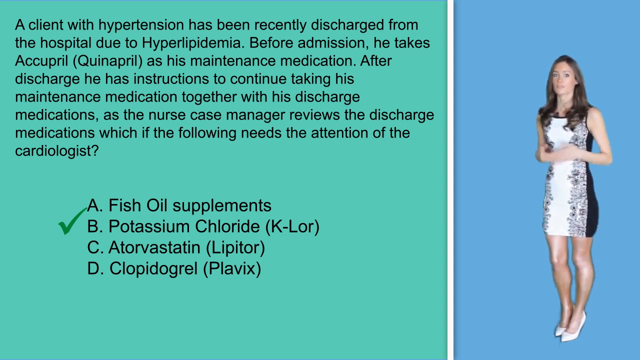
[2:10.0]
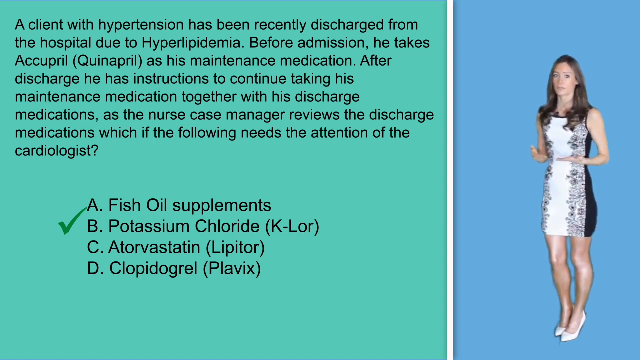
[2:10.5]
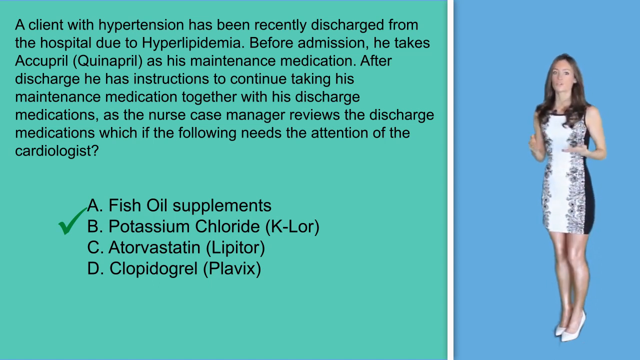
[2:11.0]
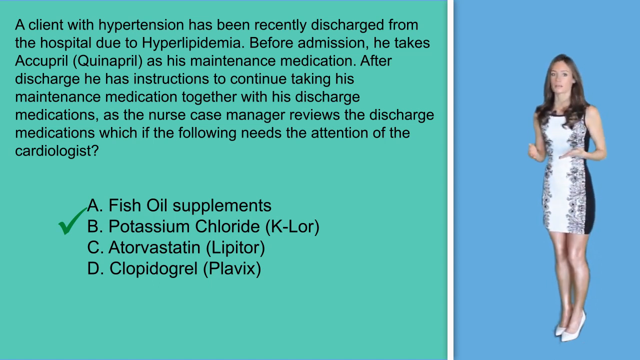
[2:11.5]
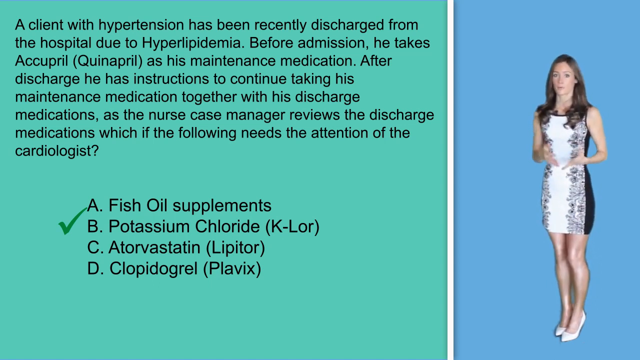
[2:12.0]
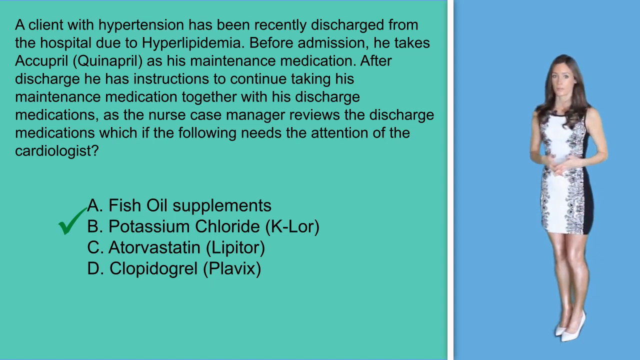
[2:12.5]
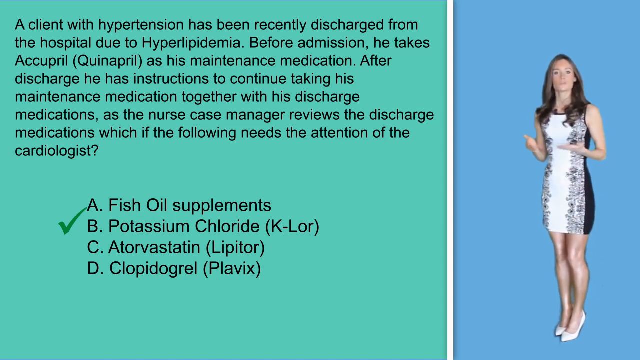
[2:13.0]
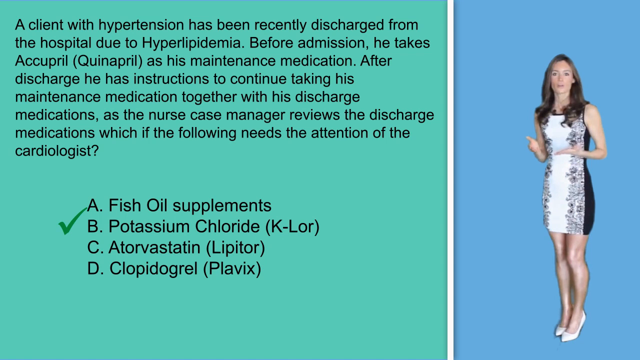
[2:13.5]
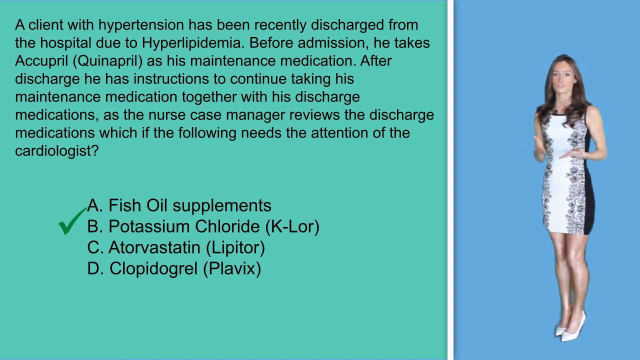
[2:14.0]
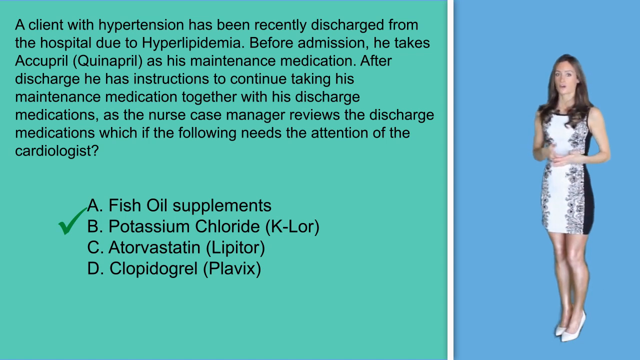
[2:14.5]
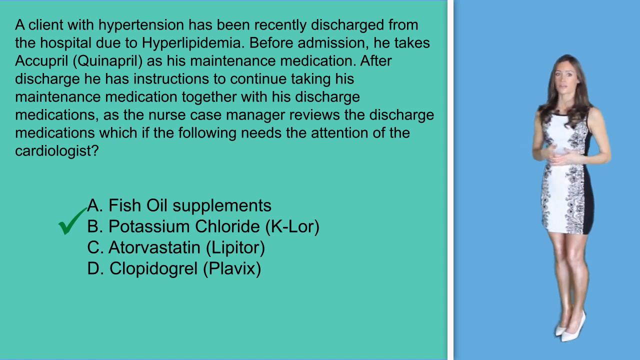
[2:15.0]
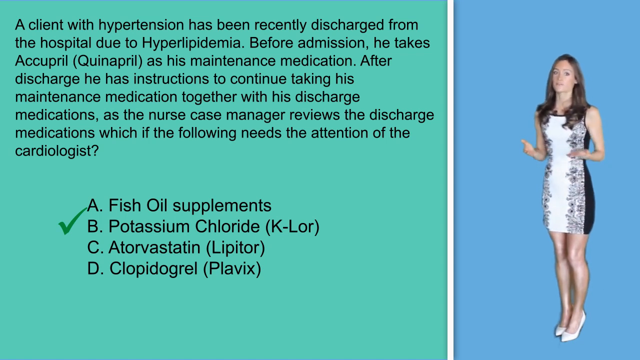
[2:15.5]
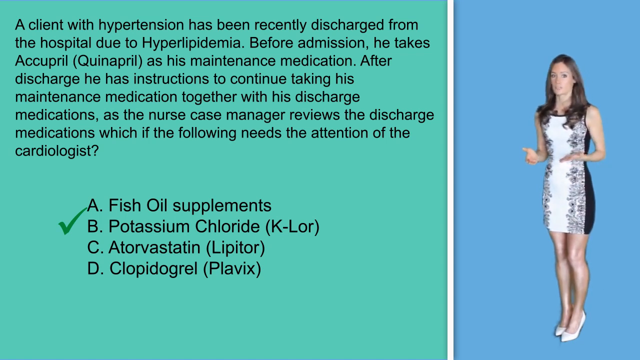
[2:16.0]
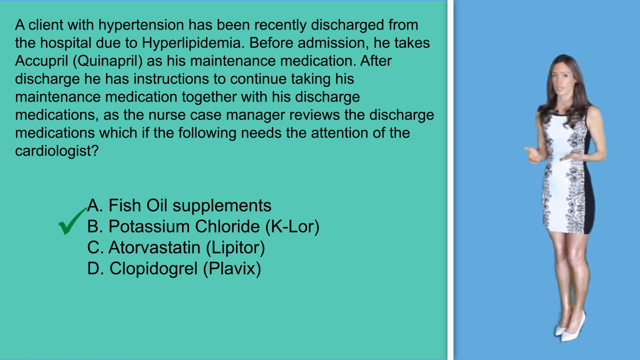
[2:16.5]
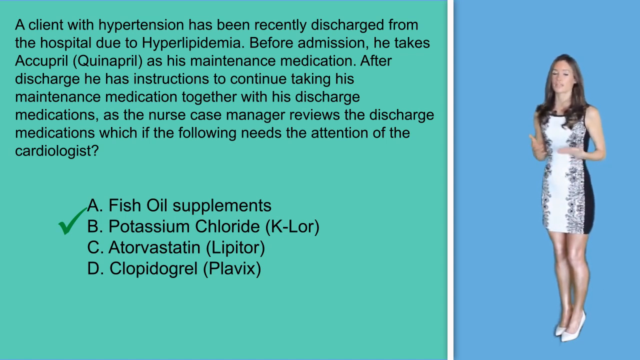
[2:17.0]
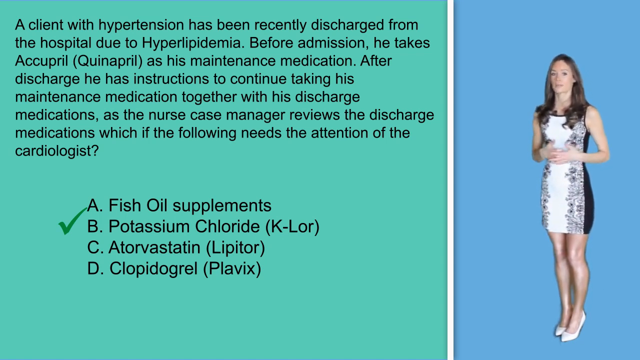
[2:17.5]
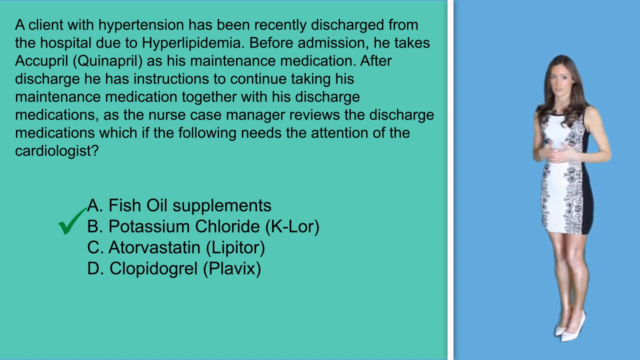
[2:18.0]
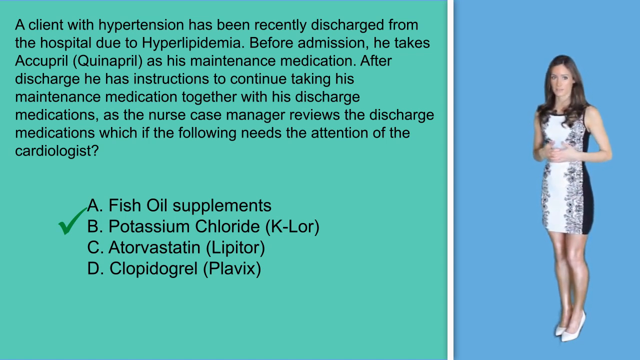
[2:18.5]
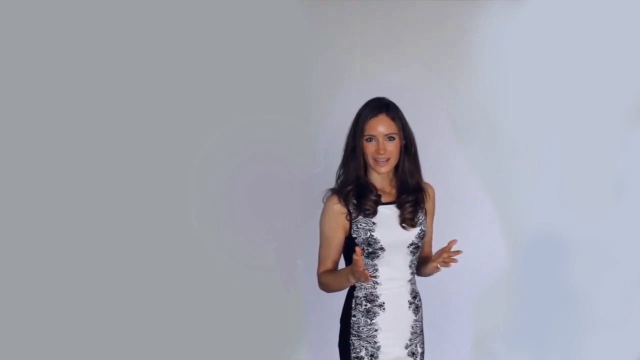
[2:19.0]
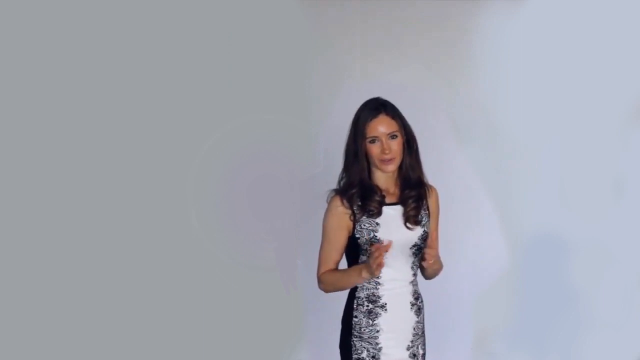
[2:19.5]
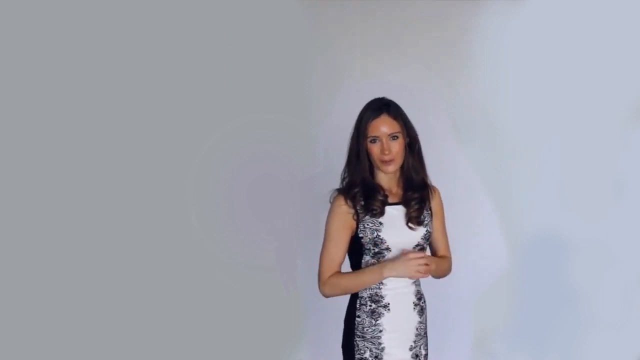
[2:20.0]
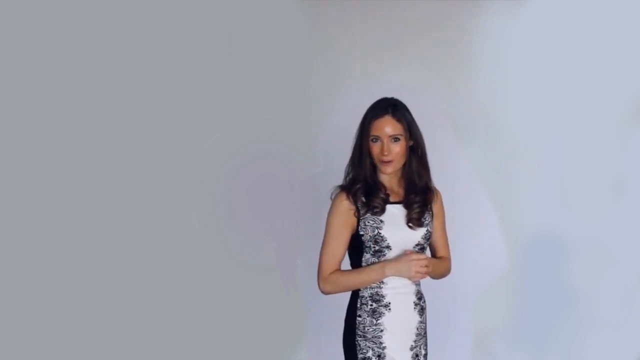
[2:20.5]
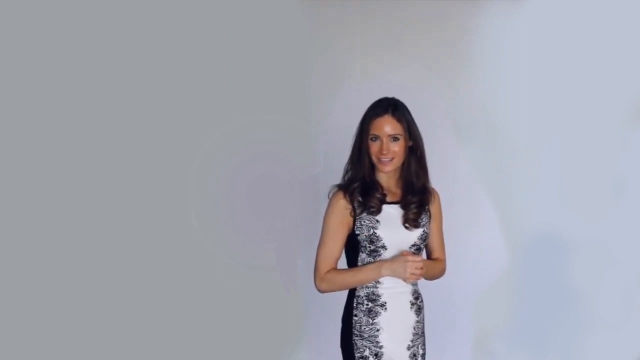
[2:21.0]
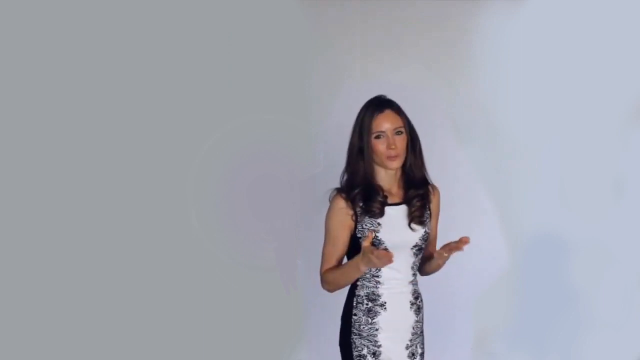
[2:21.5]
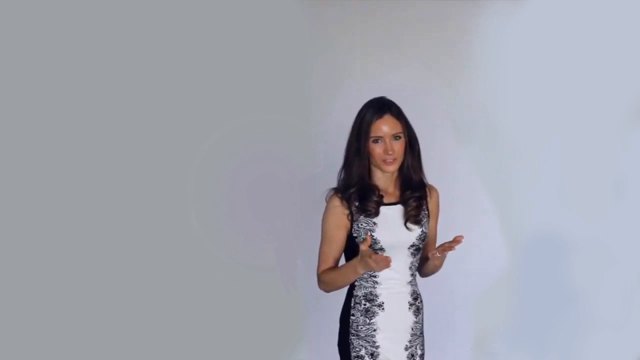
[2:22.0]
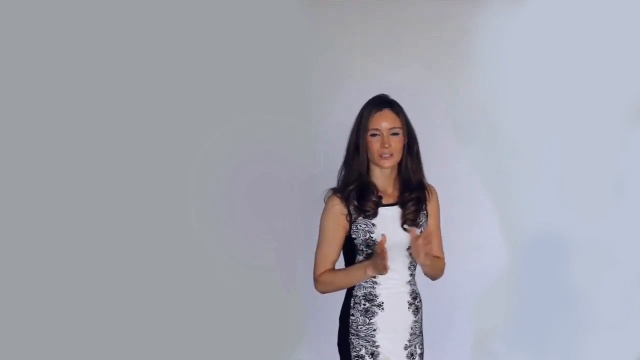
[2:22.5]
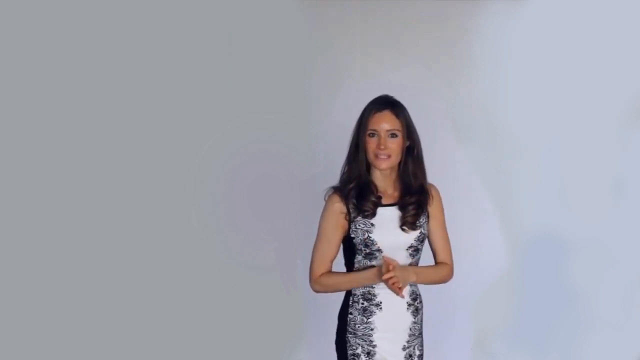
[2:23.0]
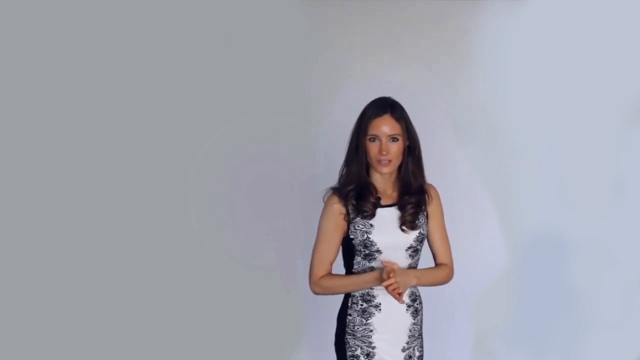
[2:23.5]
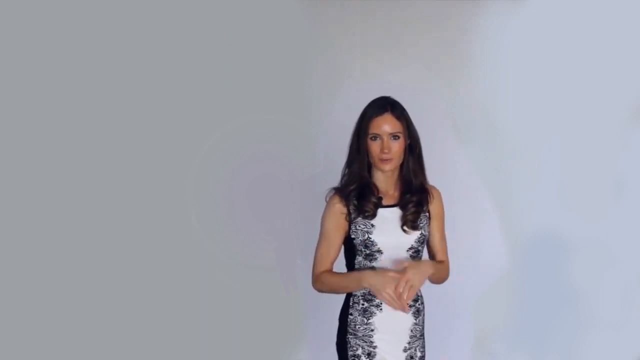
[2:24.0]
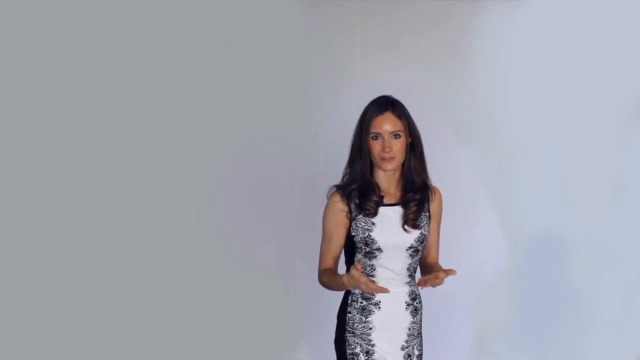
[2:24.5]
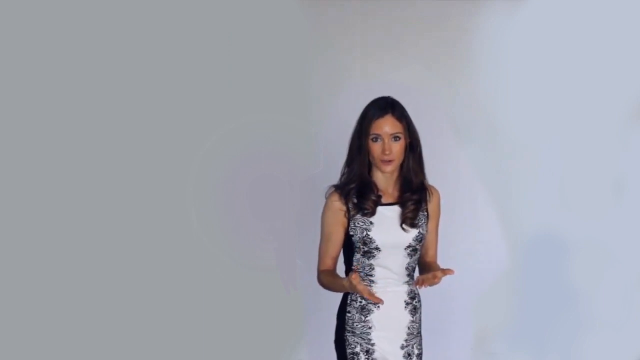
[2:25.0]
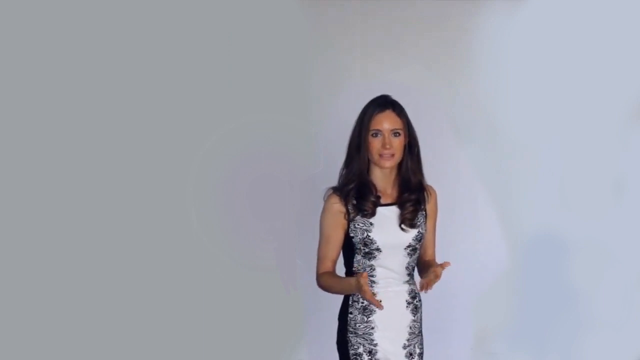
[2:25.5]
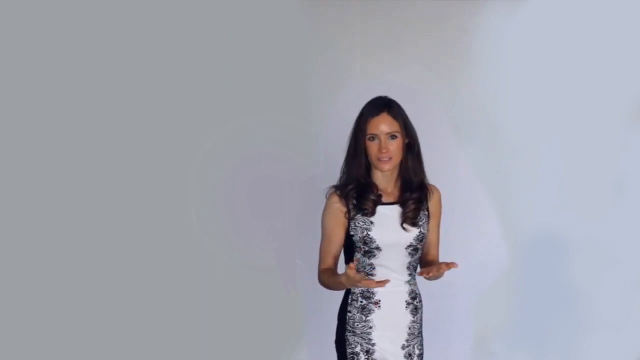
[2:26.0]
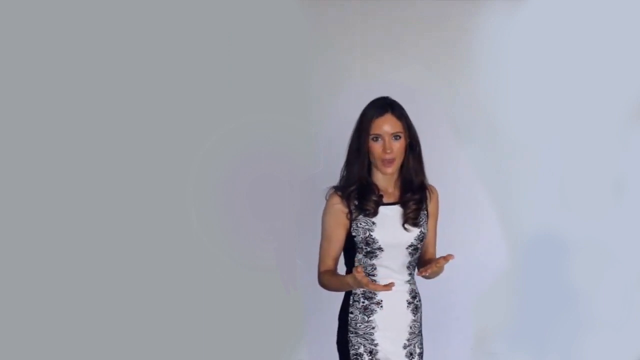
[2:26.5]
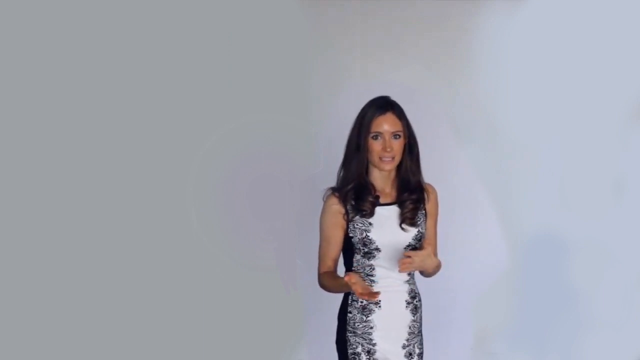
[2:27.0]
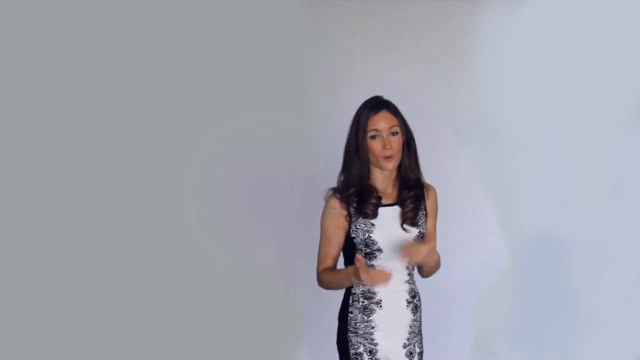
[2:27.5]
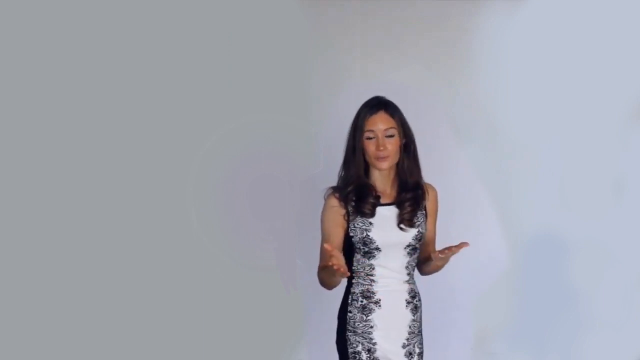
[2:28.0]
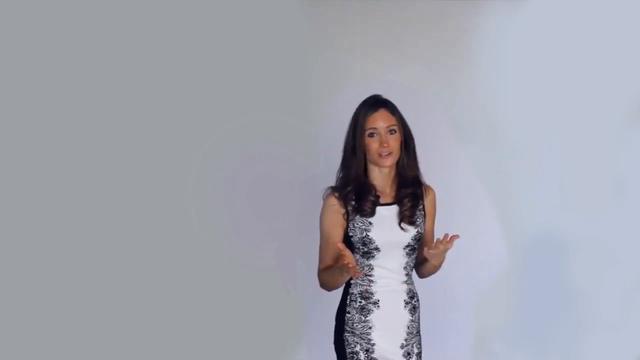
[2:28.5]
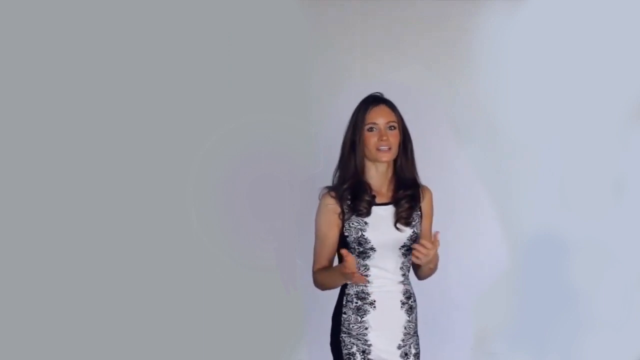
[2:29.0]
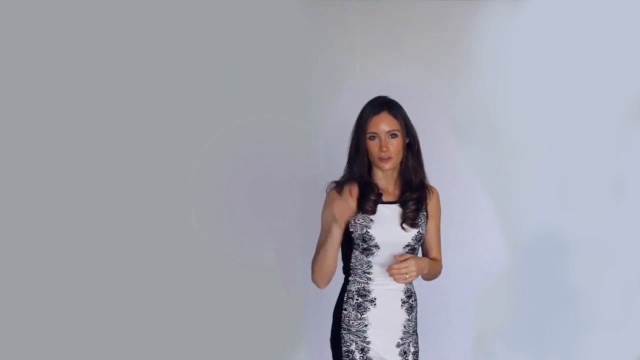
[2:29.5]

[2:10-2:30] On the right, a woman in a white and black dress with what looks like a floral pattern stands against a baby blue background; she has brown hair, wears white heels, and is very expressive with her hands. On the left, a robin's egg blue background shows black text: "A client with hypertension has been recently discharged from the hospital due to hyperlipidemia. Before admission, he takes Quinapril as his maintenance medication. After discharge, he has instructions to continue taking his maintenance medication together with his discharge medications. As the nurse case manager reviews the discharge medications, which of the following needs the attention of the cardiologist?" with options "A, fish oil supplements, B, potassium chloride, C, Lipitor, D, Plavix." A green check mark is by potassium chloride. The video then cuts to a different angle of her speaking, sort of toward the right side of the frame with a white background behind her; her face looks a little shiny. She keeps talking and gesturing expressively while looking into the camera, and makes a sort of up-and-down motion with her hand.